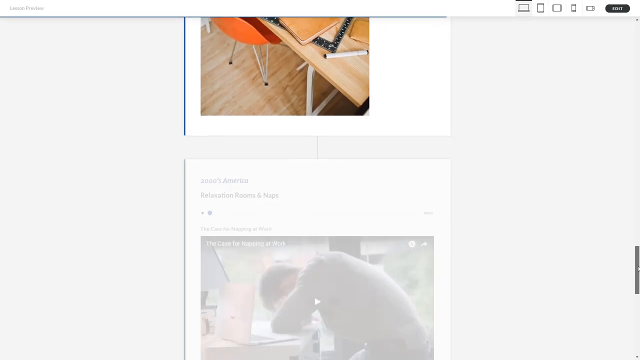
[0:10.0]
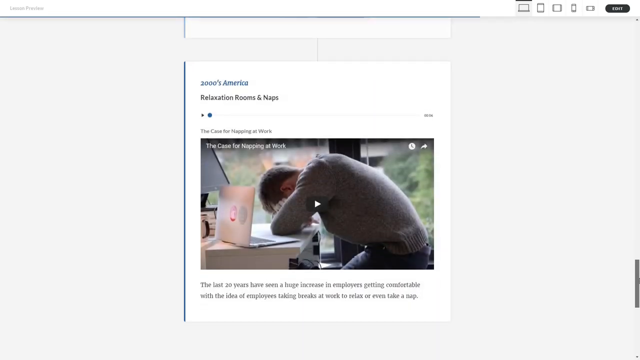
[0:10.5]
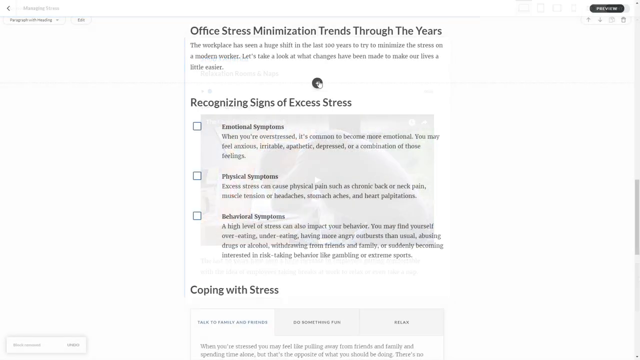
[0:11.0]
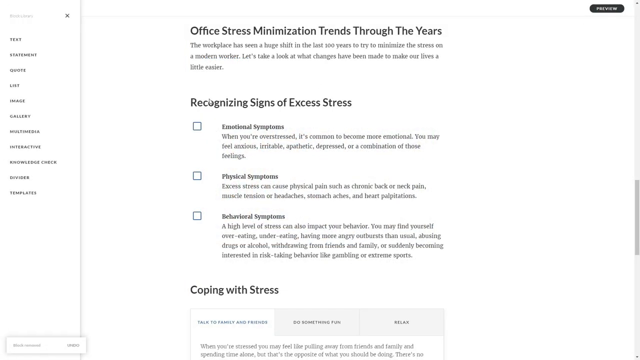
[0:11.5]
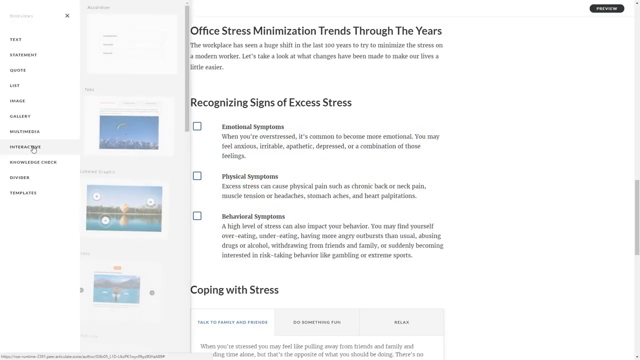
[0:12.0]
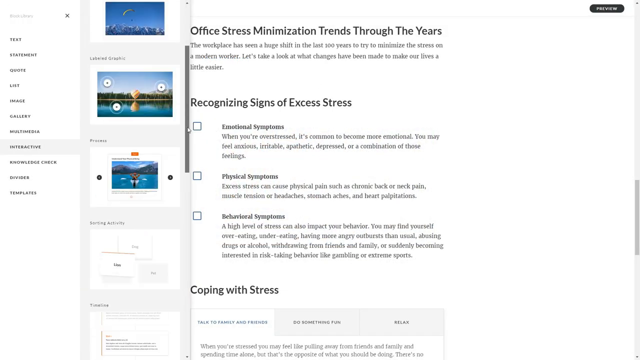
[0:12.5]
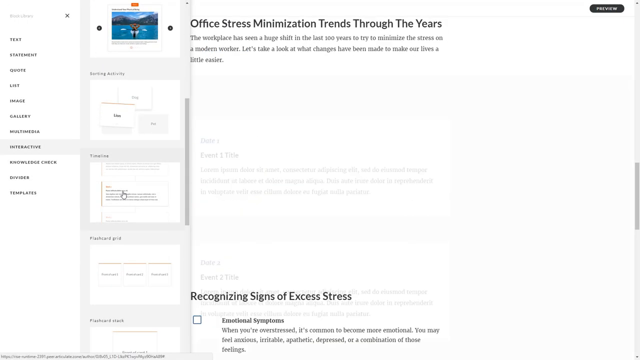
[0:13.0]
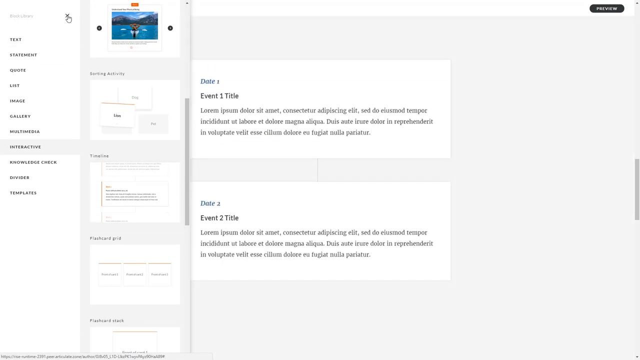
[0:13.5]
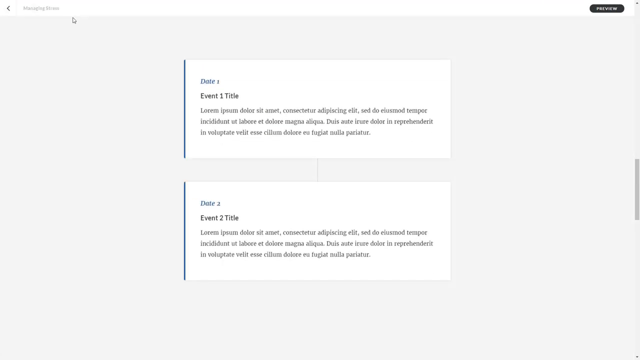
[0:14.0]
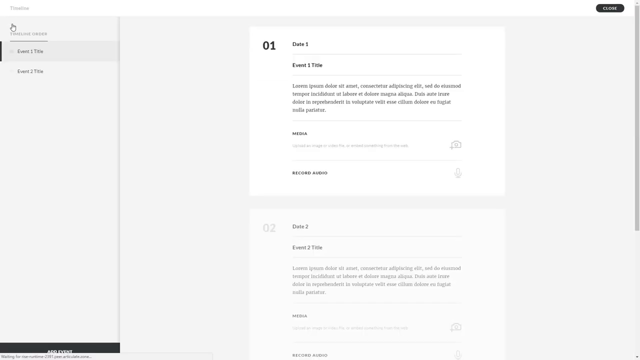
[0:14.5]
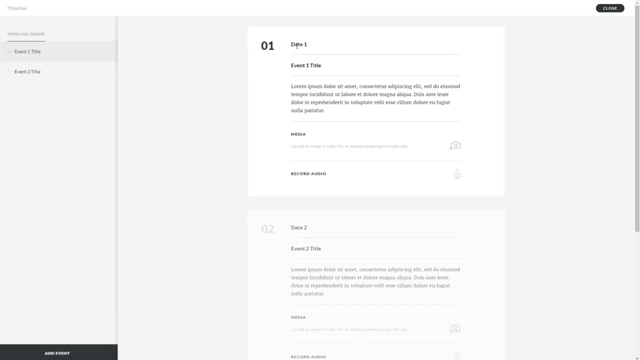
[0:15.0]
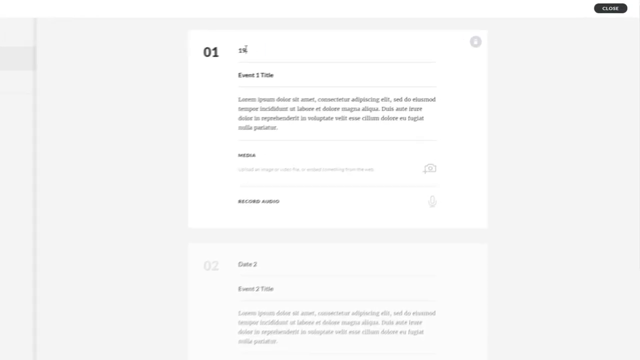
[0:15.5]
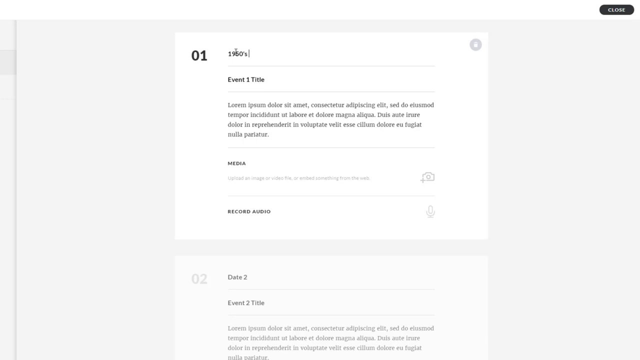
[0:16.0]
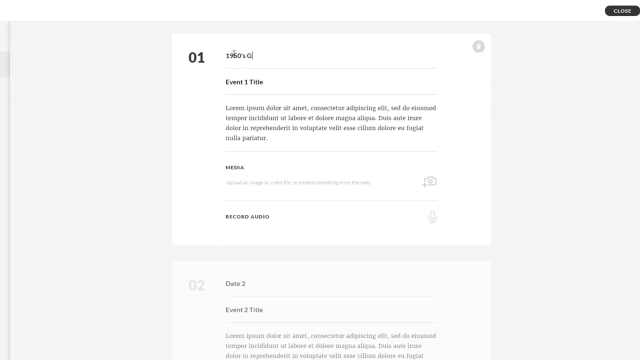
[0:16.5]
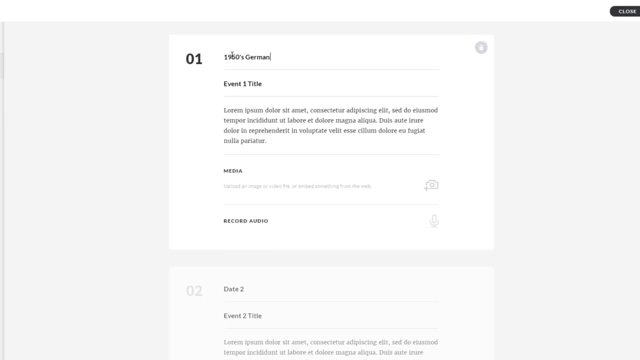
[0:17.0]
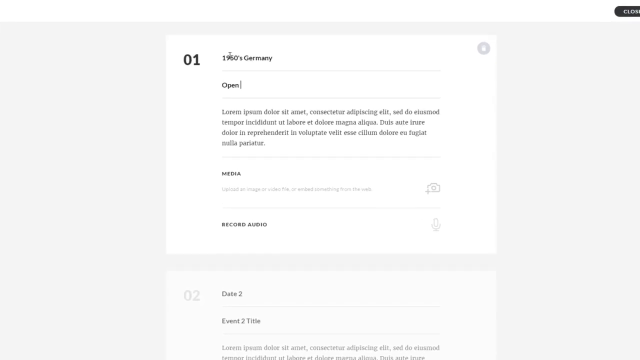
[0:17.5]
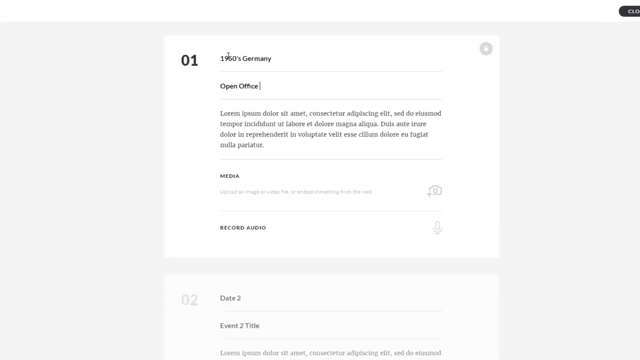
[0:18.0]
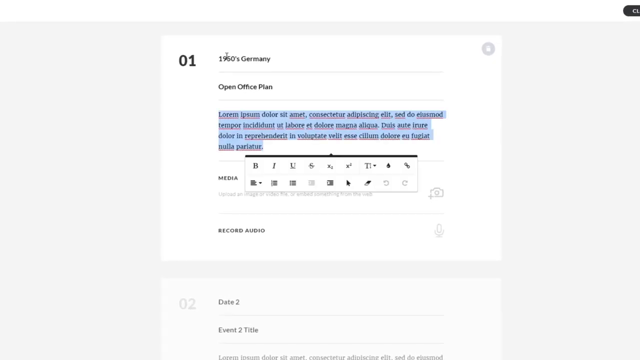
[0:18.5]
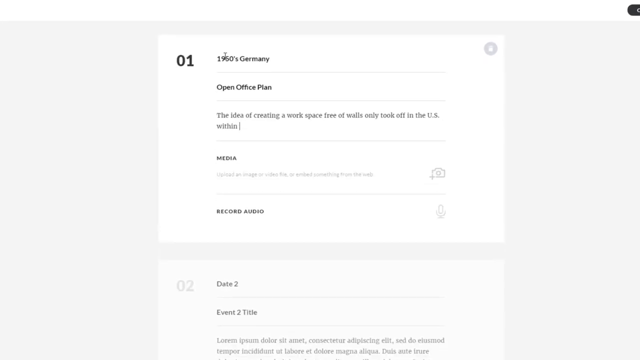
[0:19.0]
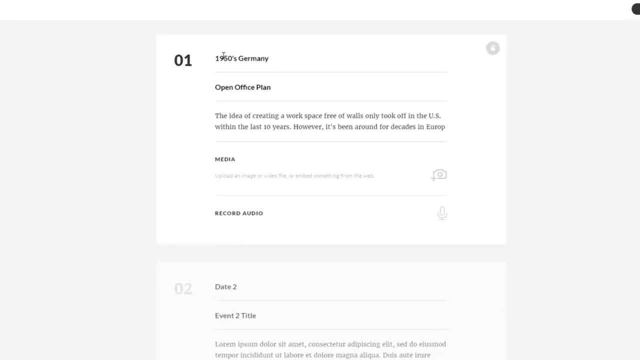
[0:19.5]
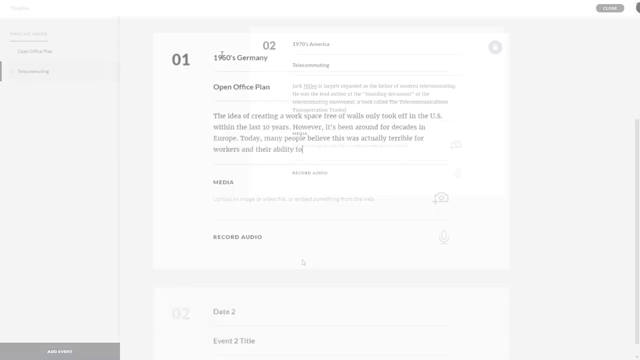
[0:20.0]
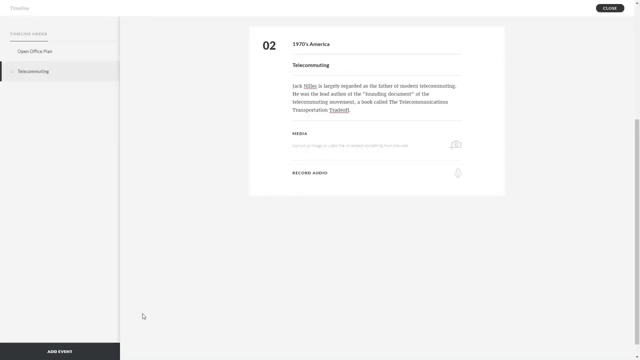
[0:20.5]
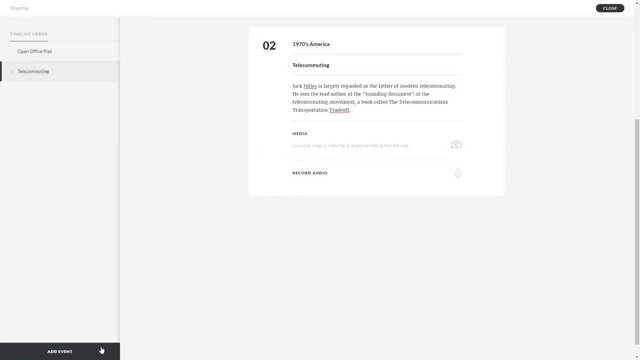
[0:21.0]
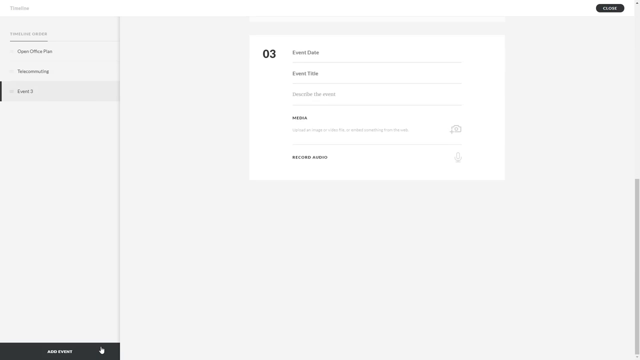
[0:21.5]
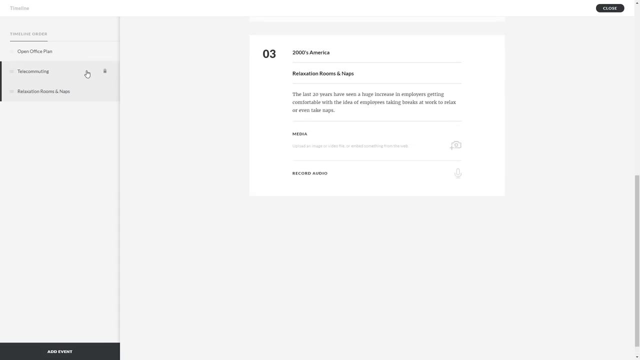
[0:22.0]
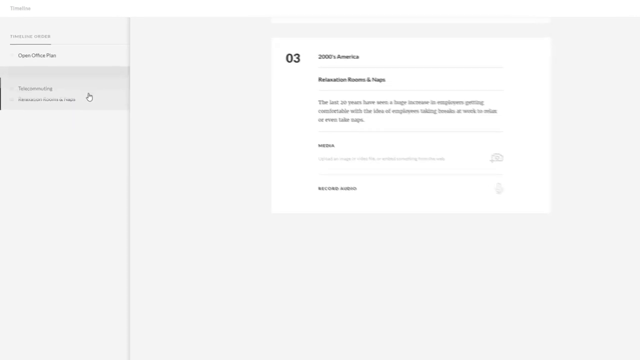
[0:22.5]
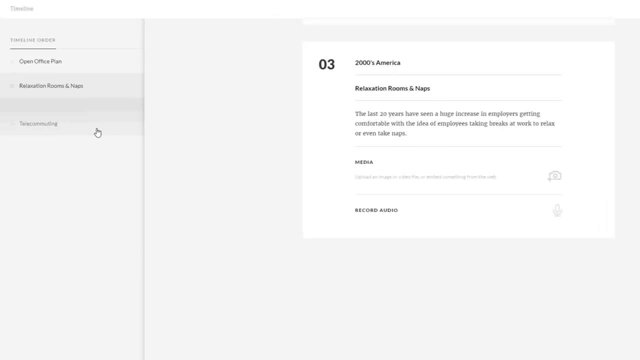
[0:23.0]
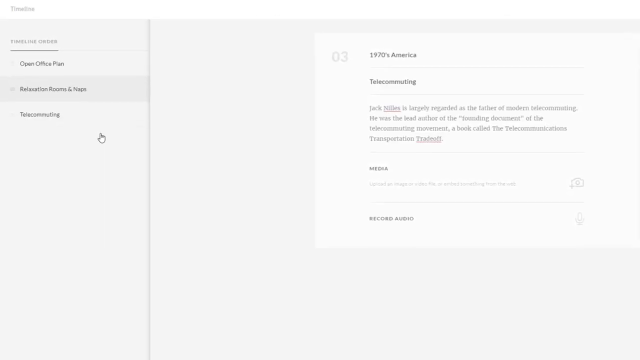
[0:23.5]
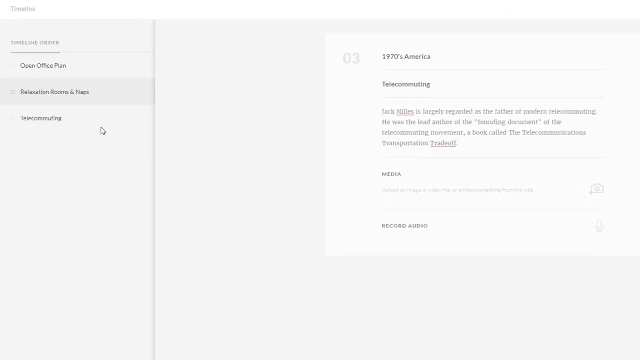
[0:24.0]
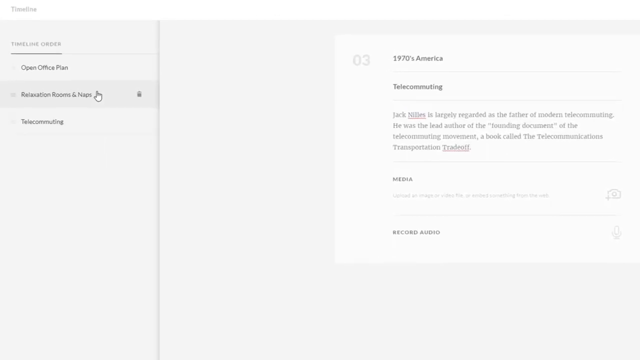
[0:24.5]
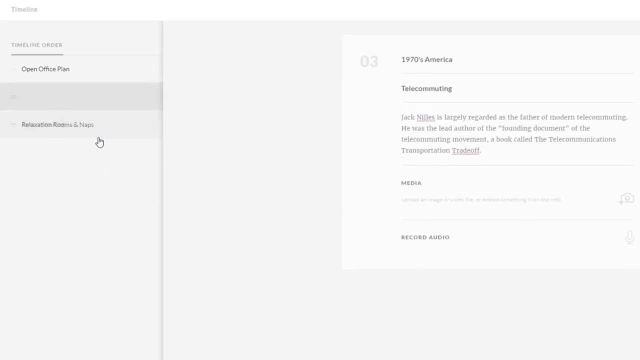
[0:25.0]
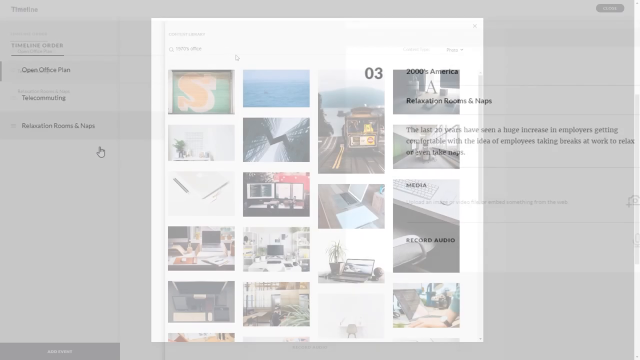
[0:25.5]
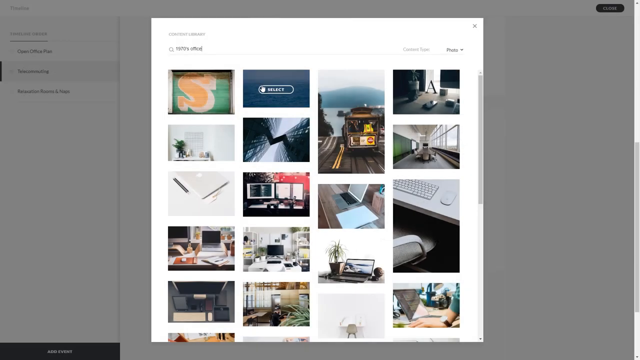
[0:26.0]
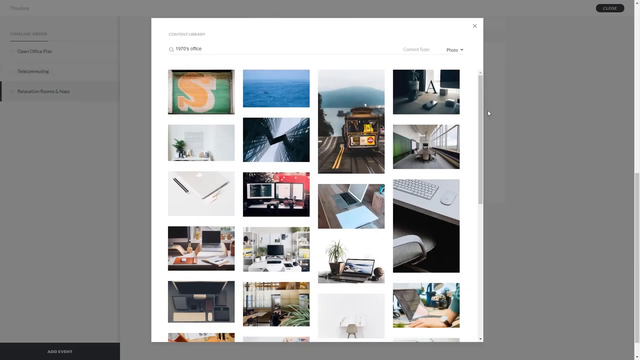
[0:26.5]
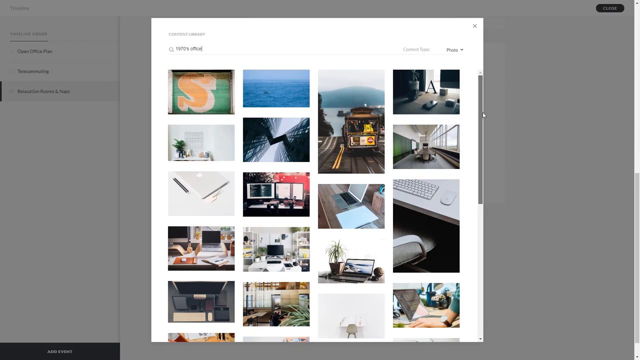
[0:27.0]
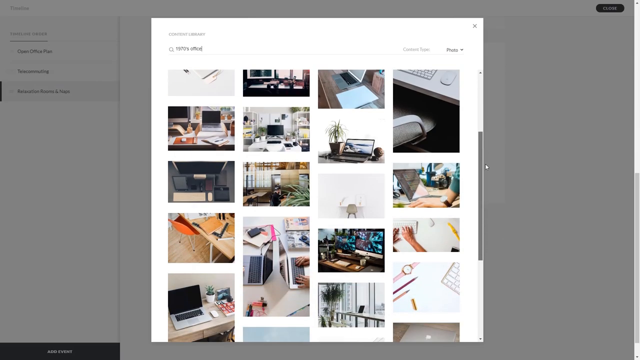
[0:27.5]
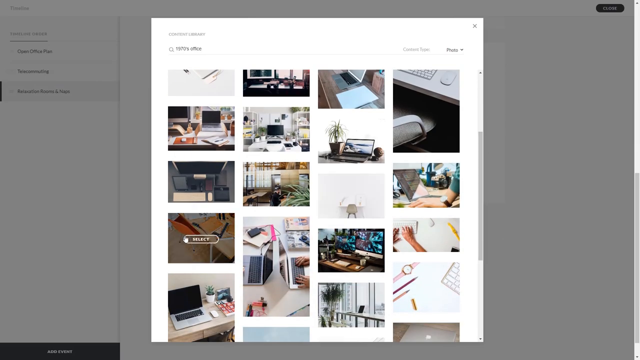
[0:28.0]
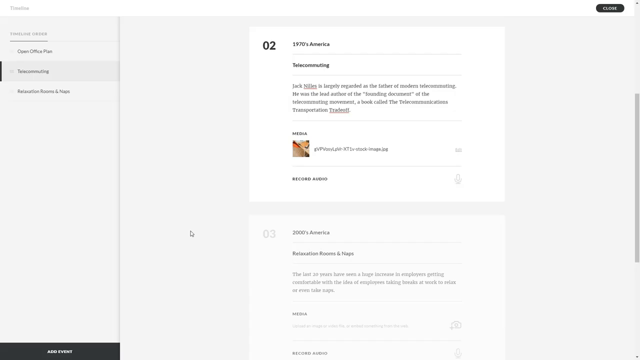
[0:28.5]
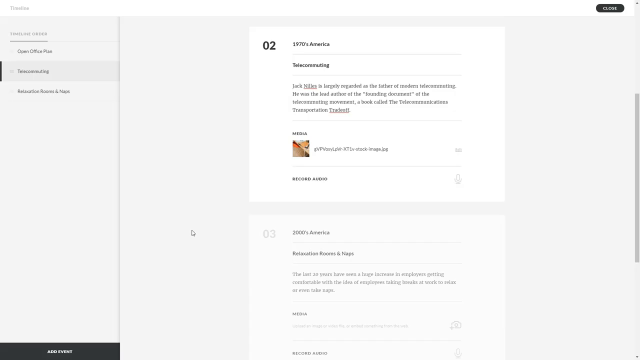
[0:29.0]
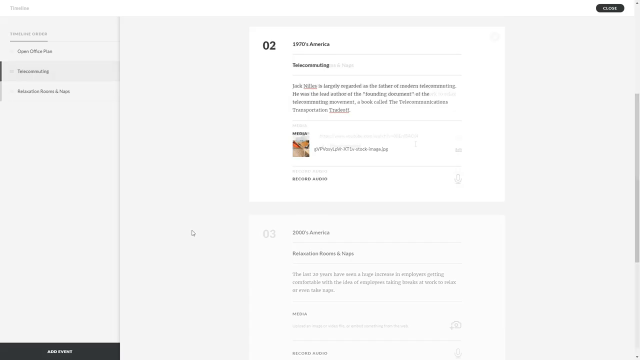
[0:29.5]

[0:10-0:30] Scrolling continues to an image of a man who sort of has his head down beside a laptop that looks like a Mac. The view switches to a different shot showing a plain white background with black text: a little bit of text, then a subsection called "recognizing signs of excess stress" with three check marks listing signs, then "coping with stress" with additional text below it. On the left is what looks like a table of contents, so the page might be something like a Google Docs document. The user clicks another section that brings up a number of images of water and other things, then clicks a different section, and the right side sort of adjusts; it now shows "date one, event one title", apparently not yet finished. The user goes back to the top, which looks like page one, with a 1 at the top. The view scrolls in and the user starts filling in information about "1960s Germany. Open office plan." and types more text. Section 02 is "1970s America", and scrolling down reaches 03, which has not been filled in. The table of contents on the left is brought back as the user sort of switches tabs and drags it down. A group of images is opened, and the user scrolls down to select the image of the wooden table seen earlier.